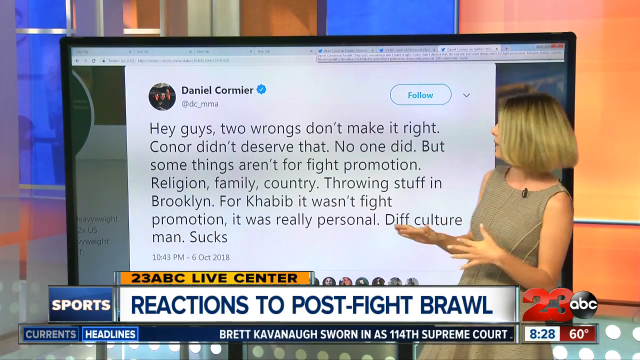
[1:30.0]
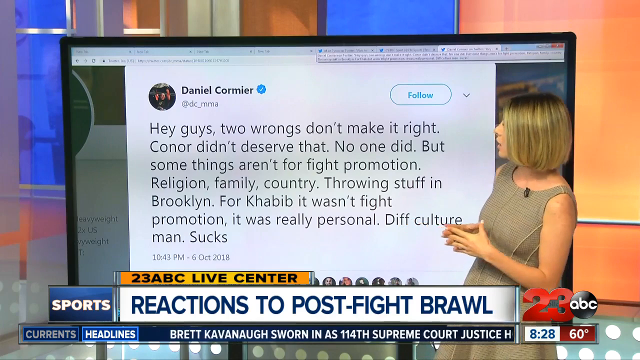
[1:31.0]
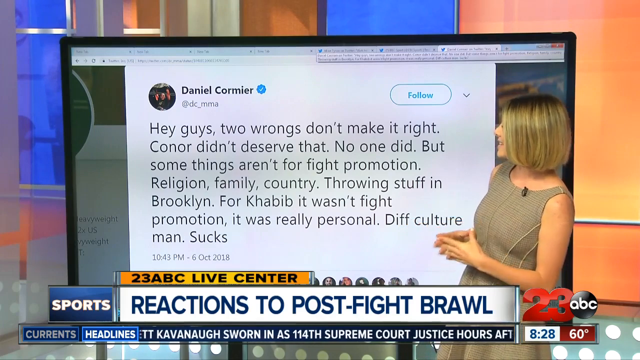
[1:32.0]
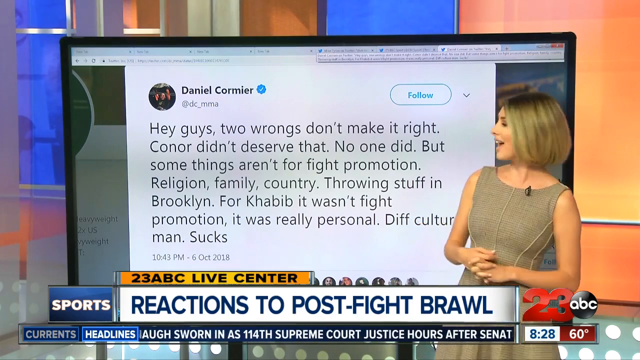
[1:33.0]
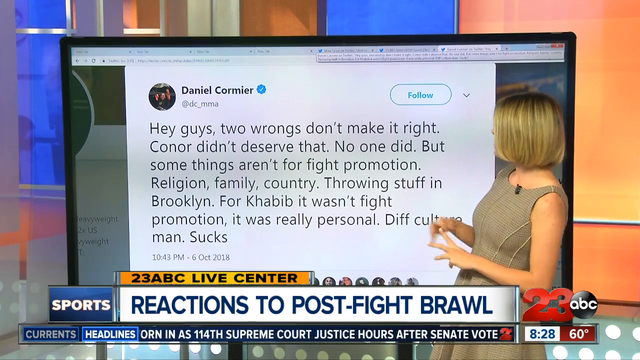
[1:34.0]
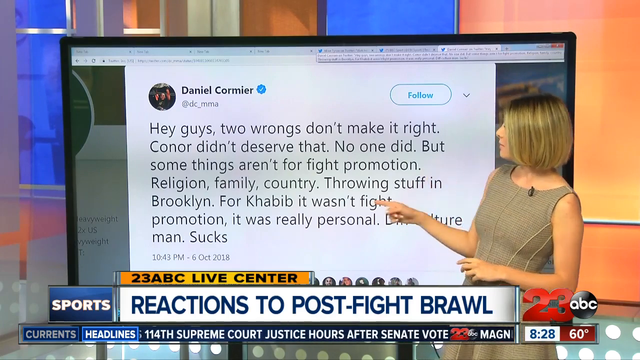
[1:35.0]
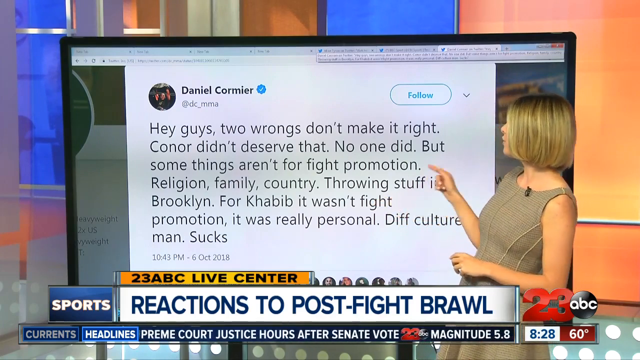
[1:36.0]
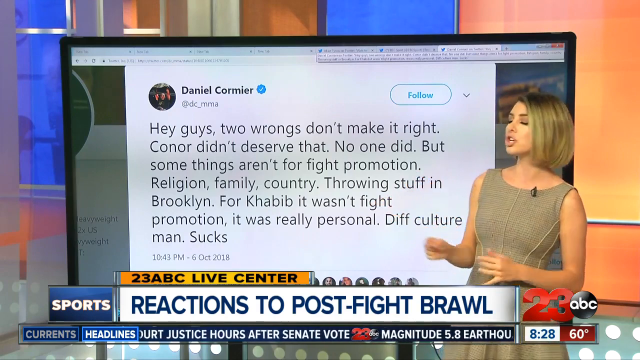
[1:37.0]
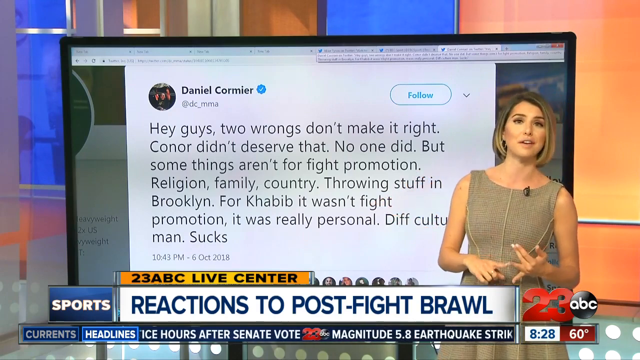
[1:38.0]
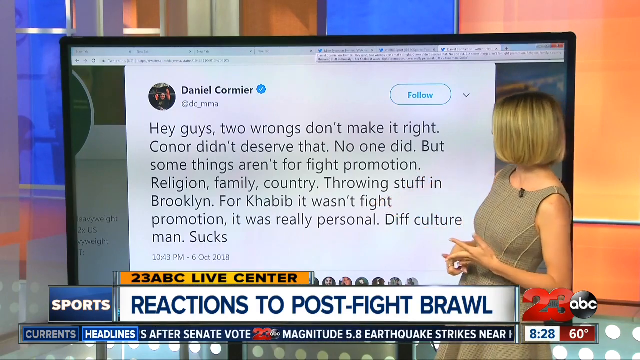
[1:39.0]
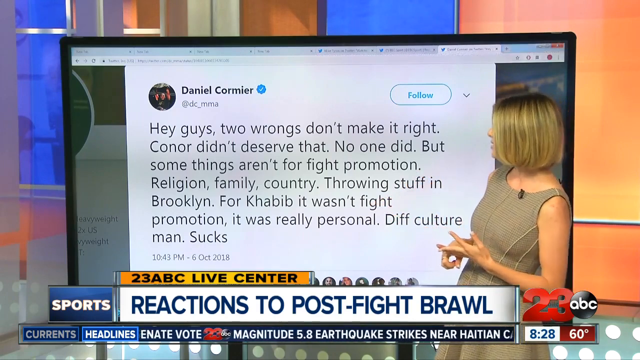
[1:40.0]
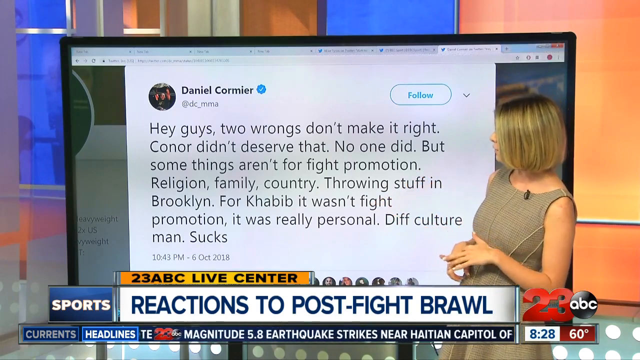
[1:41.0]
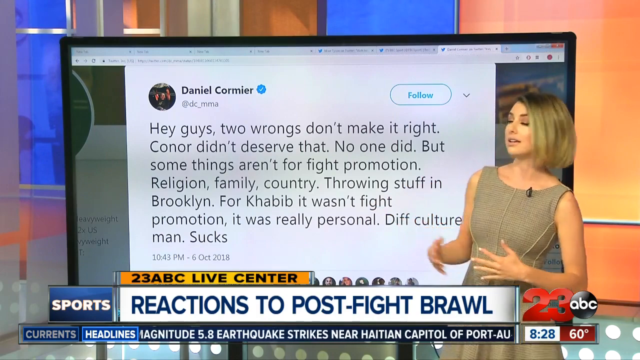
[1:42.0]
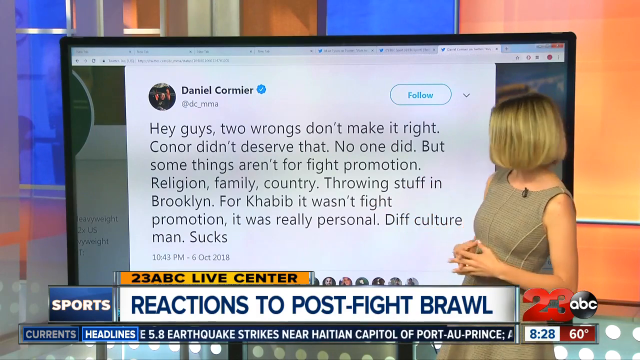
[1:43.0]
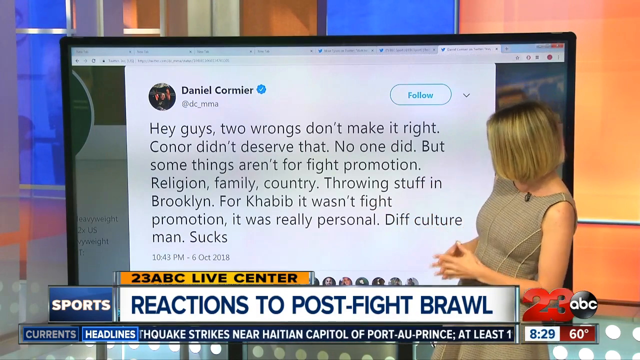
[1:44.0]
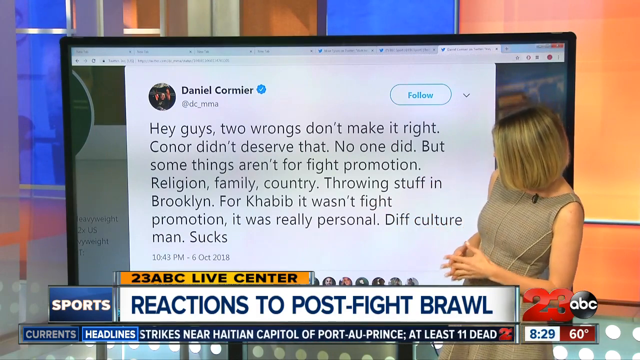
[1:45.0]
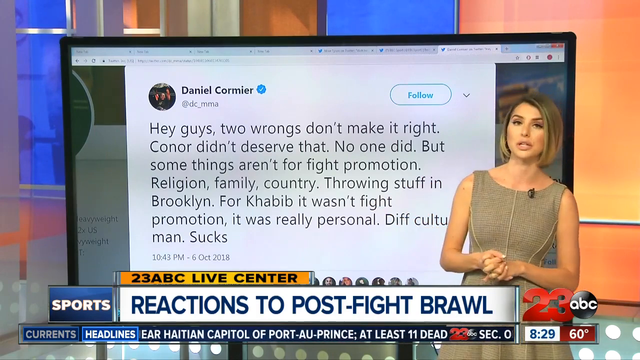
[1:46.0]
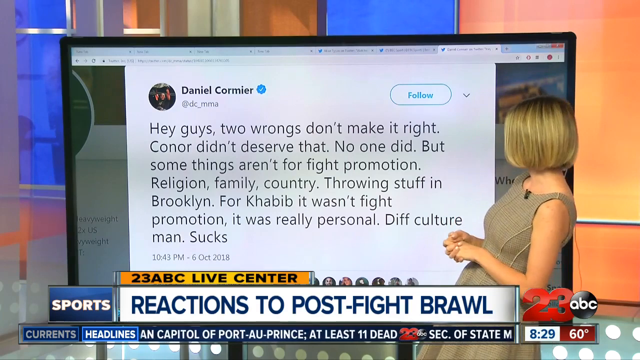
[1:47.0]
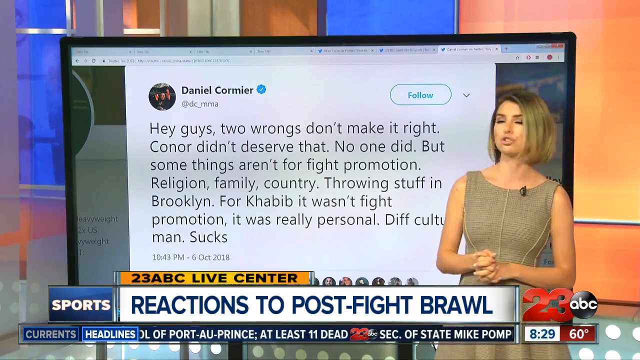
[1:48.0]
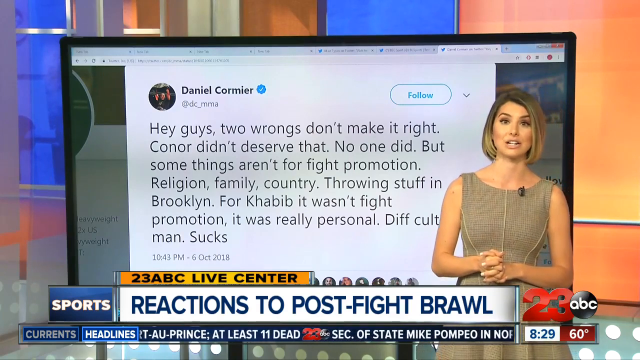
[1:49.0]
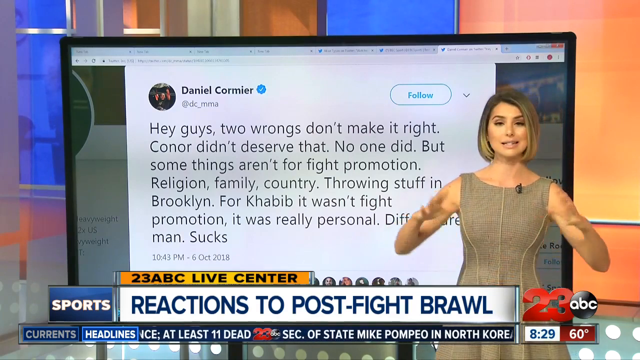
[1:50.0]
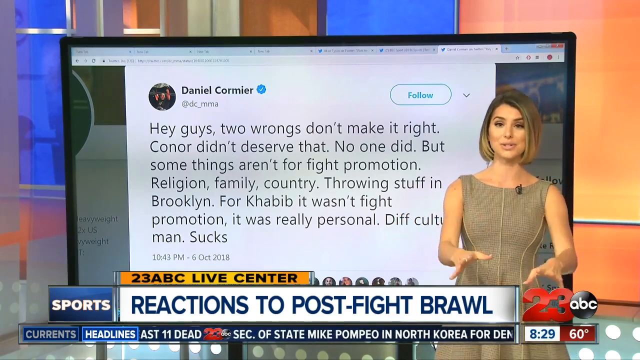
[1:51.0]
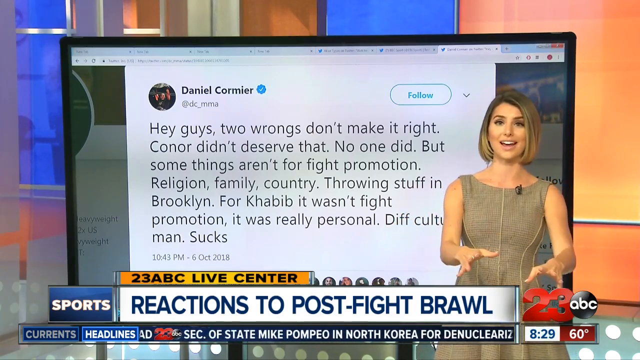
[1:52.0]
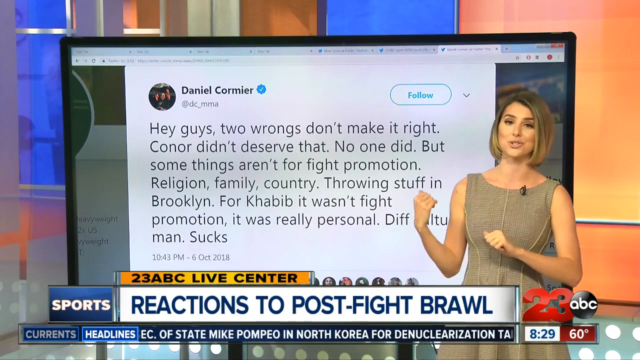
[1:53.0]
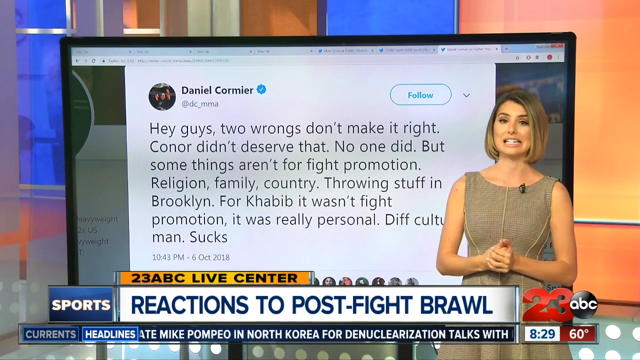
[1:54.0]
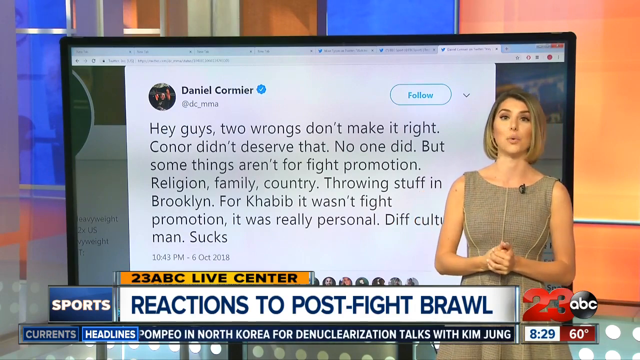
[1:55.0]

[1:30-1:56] A post from a UFC fighter is shown with his picture in a circle and a follow tag, reading "hey guys two wrongs don't make it right" and continuing that "it was really personal." The 23 ABC Live Center sports presenter points out what Daniel Cormier said and the comments on the event, pointing to specific details. She snaps her fingers, stares at the screen, looks back at the camera, moves back and forth, spreads her arms out, and makes hand gestures, appearing very confident.